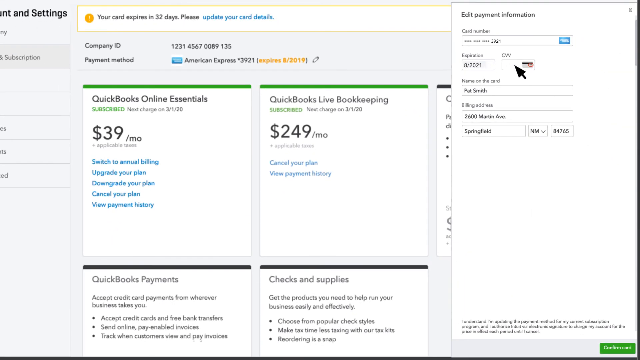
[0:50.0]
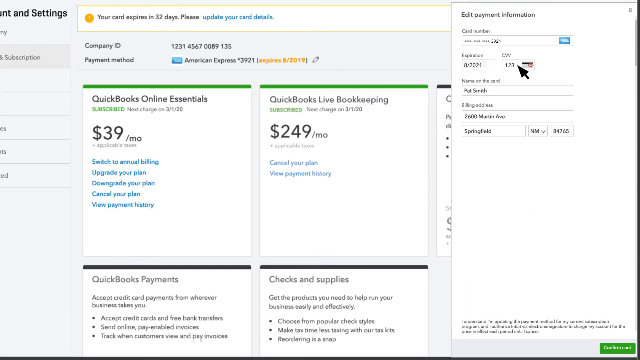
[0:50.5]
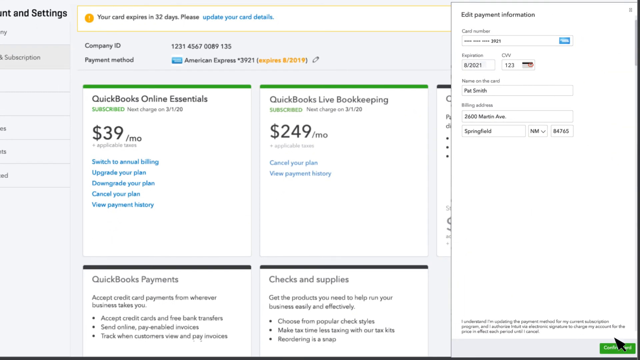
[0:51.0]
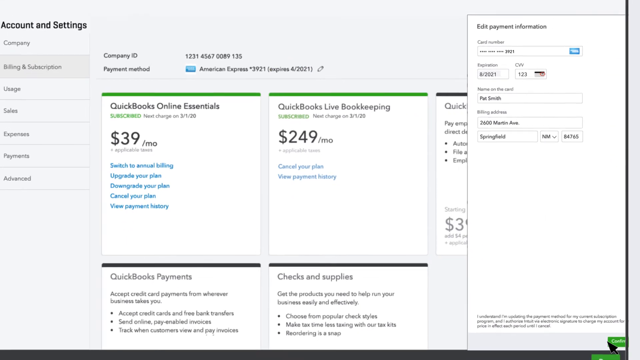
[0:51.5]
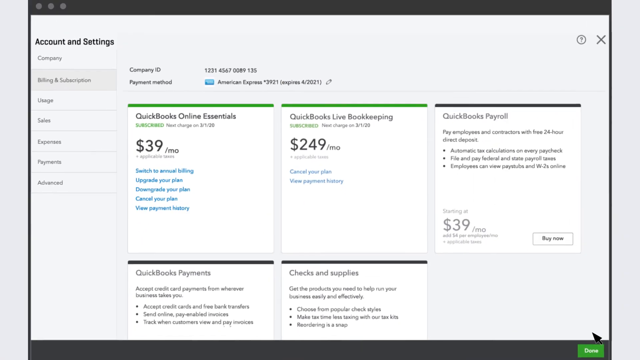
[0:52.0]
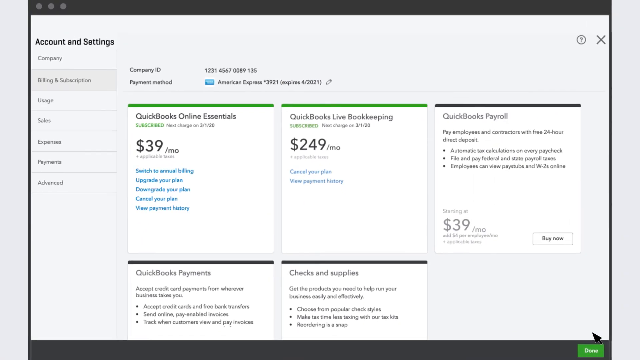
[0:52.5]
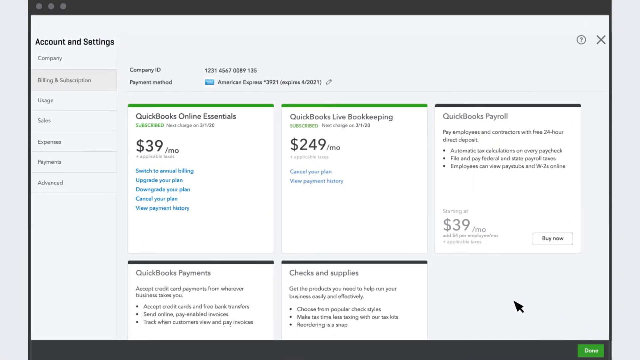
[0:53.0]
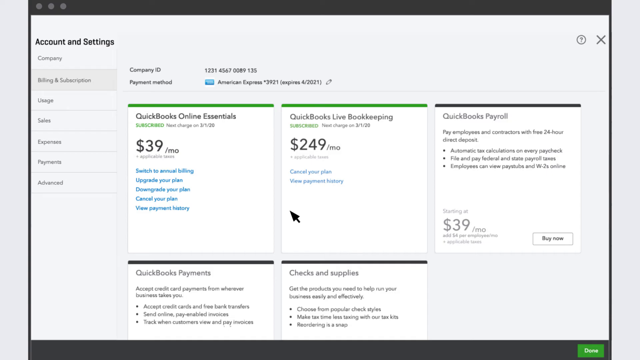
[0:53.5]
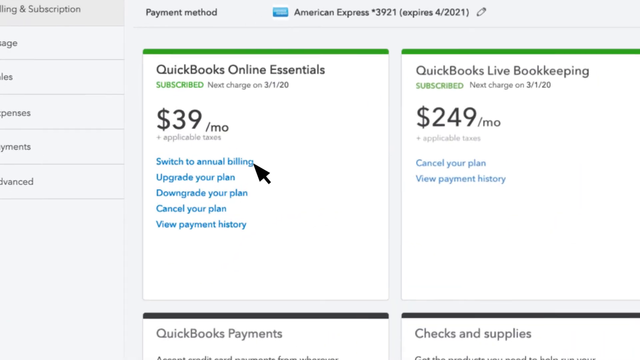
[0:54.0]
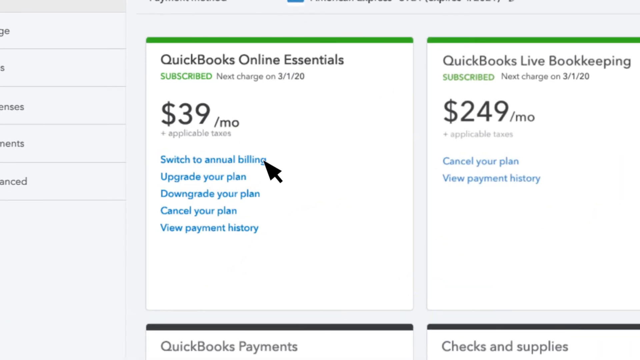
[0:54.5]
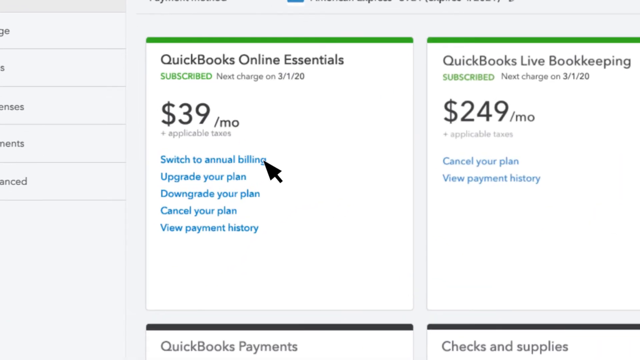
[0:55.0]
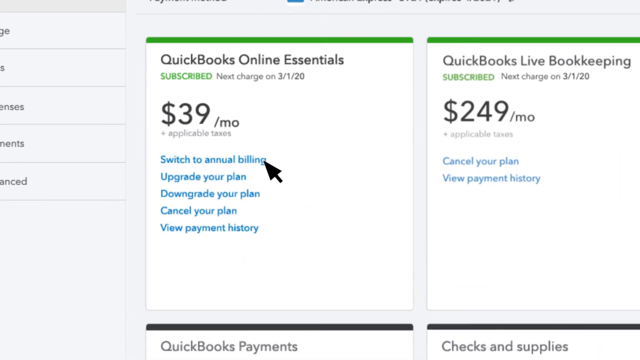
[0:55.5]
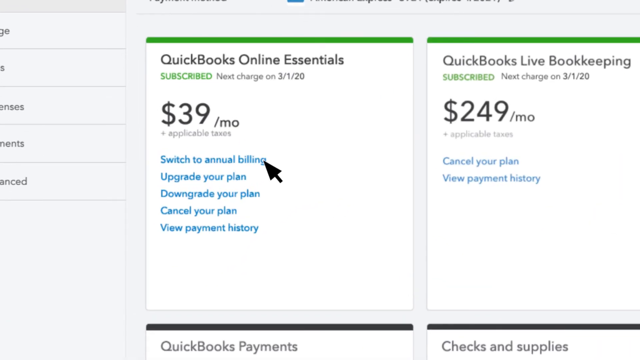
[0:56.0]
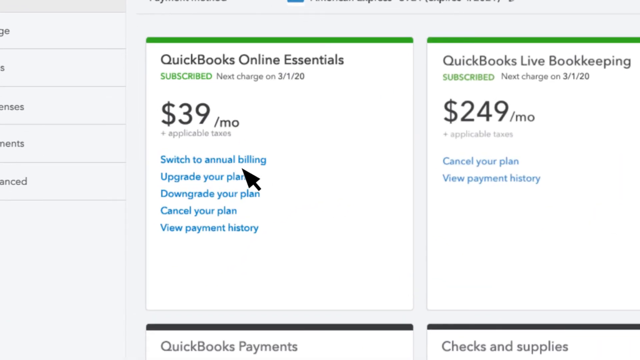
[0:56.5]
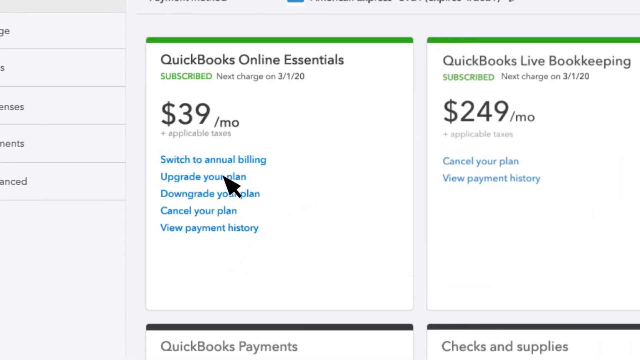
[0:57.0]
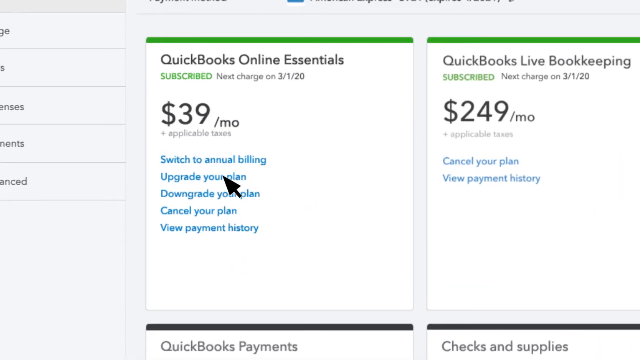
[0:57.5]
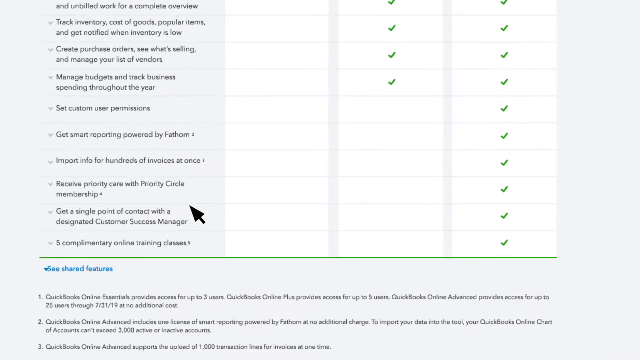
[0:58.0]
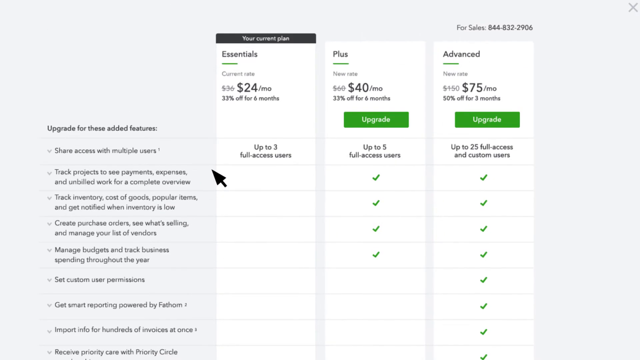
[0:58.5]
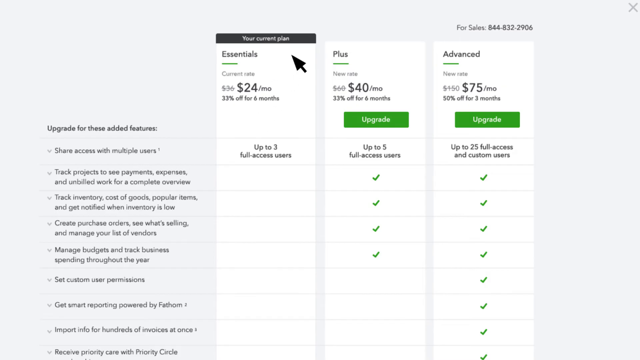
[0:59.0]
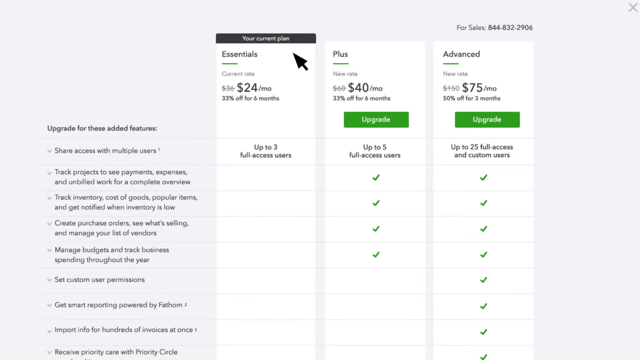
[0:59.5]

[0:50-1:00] The arrow continues navigating the page. It points to "QuickBooks online essentials" at $39 per month, with options to switch to annual billing, upgrade or downgrade the plan, cancel the plan, or view payment history. Alongside it, another plan costs $249 per month and also has options to cancel the plan or view payment history. When upgrade plans is clicked, three plans appear: the least expensive, essentials, at $24 a month, followed by plus at $40 per month and advanced at $75 per month.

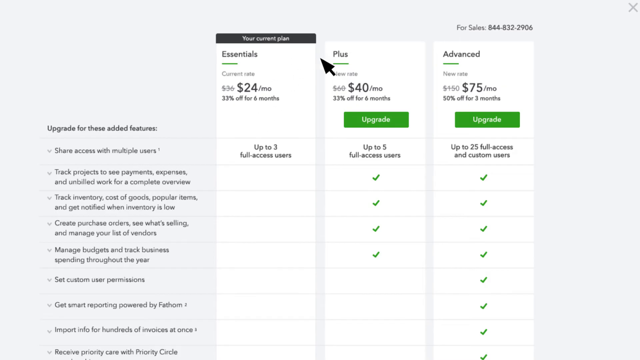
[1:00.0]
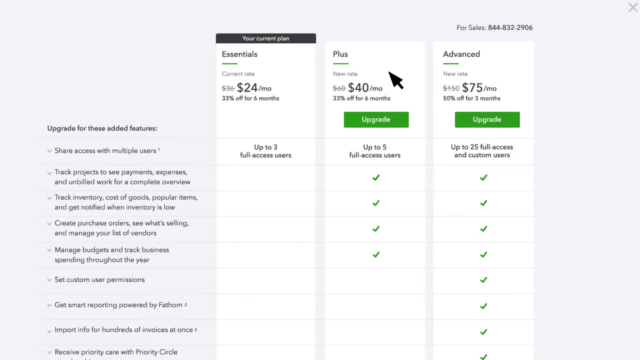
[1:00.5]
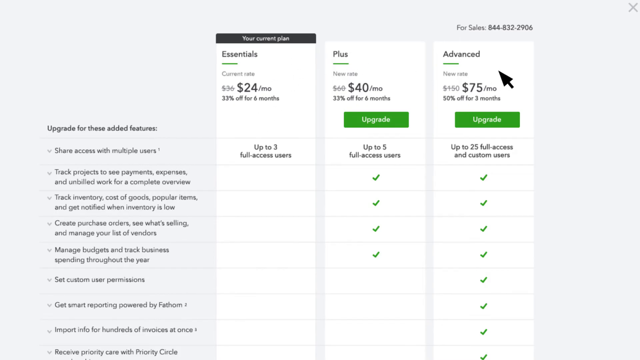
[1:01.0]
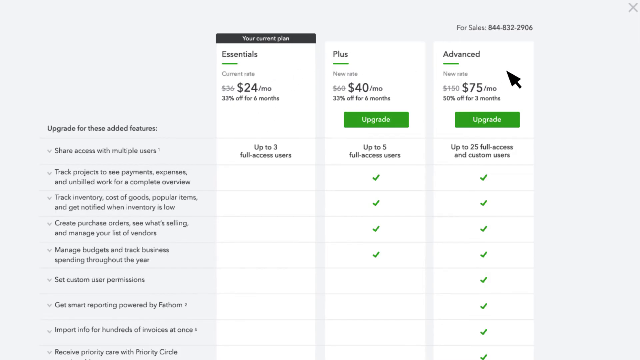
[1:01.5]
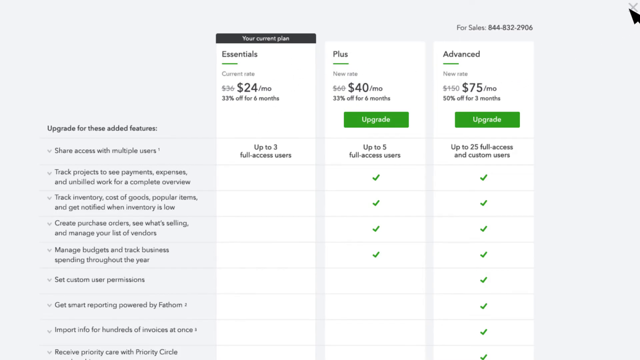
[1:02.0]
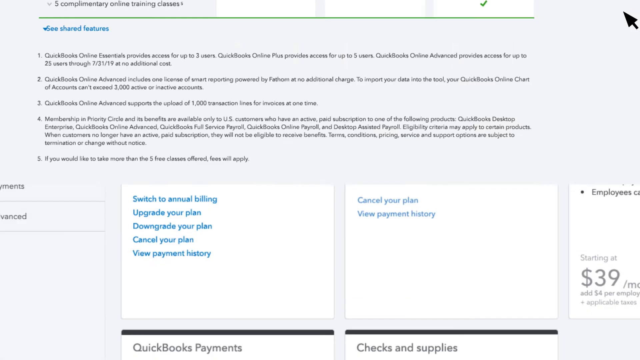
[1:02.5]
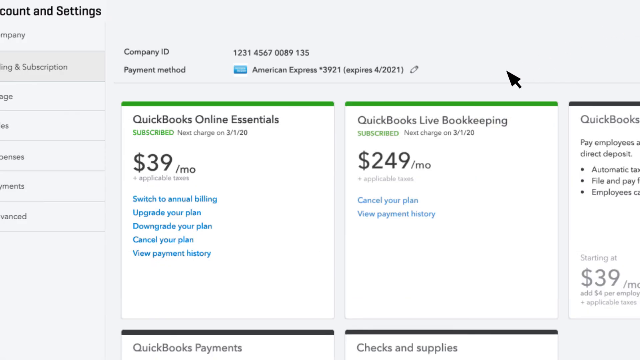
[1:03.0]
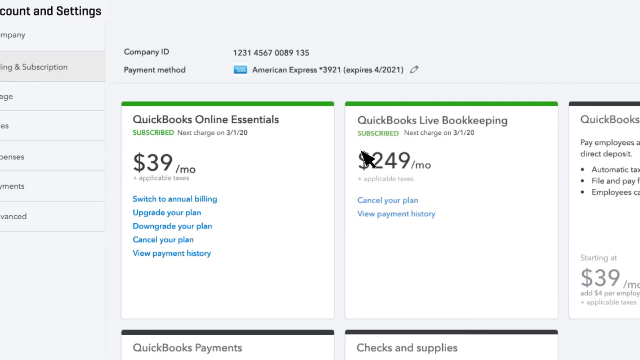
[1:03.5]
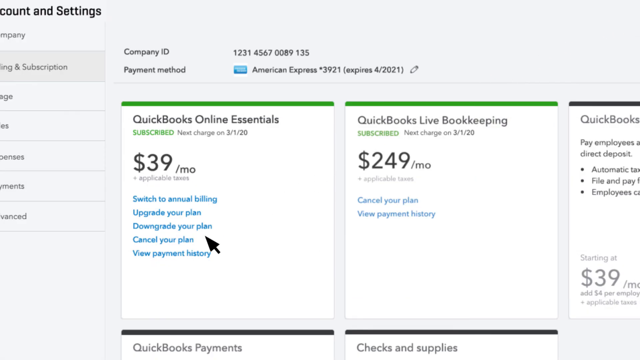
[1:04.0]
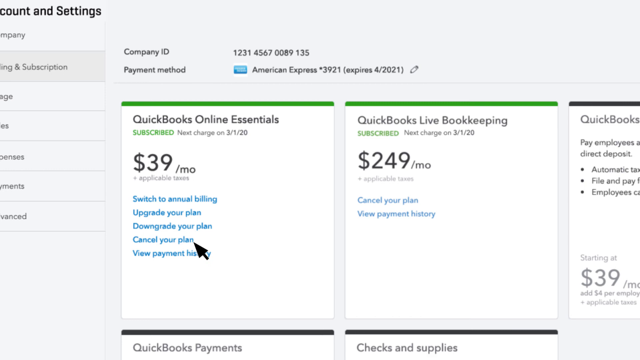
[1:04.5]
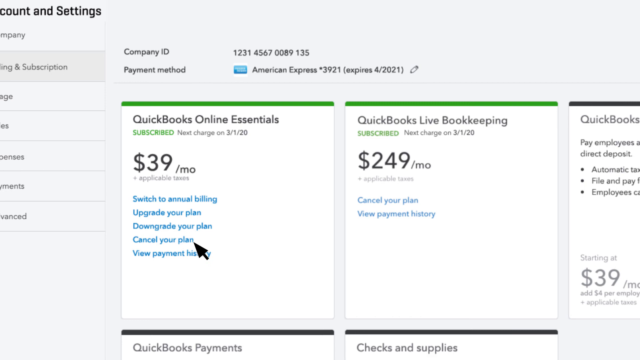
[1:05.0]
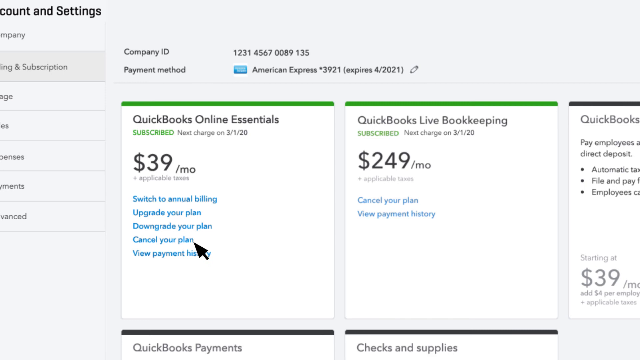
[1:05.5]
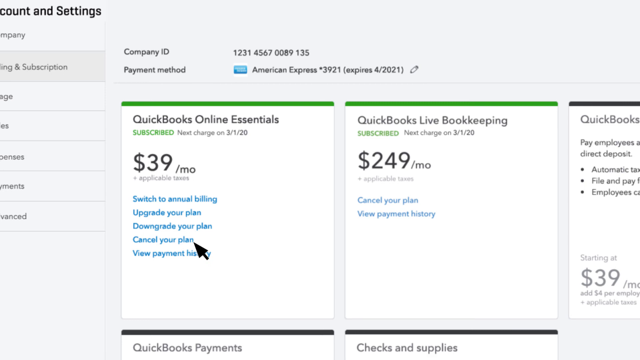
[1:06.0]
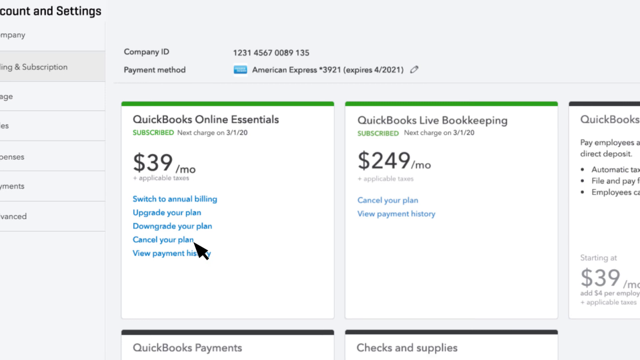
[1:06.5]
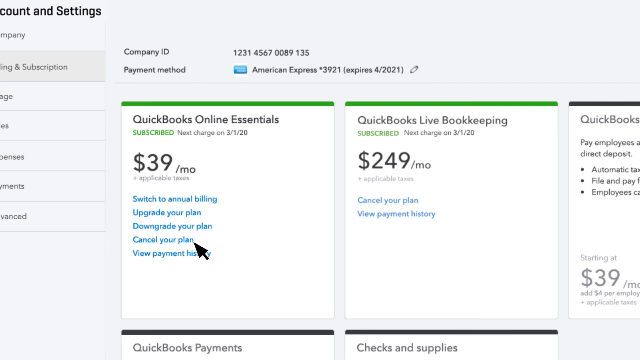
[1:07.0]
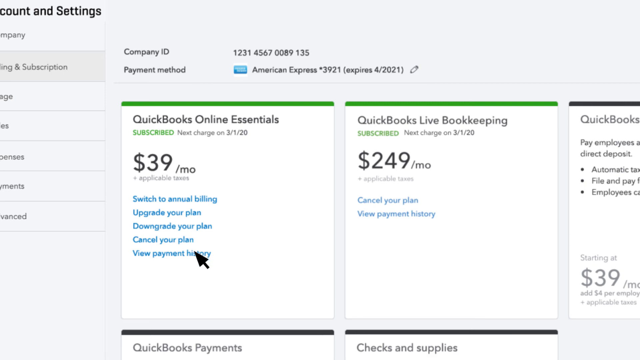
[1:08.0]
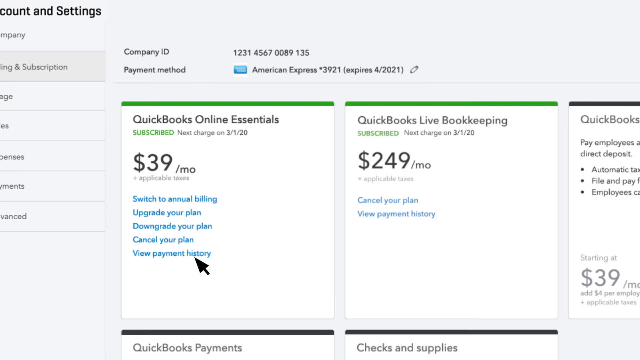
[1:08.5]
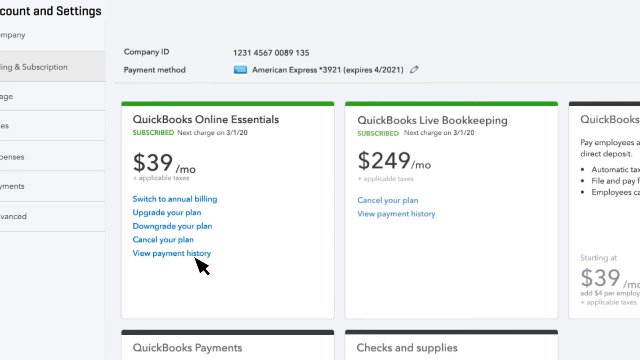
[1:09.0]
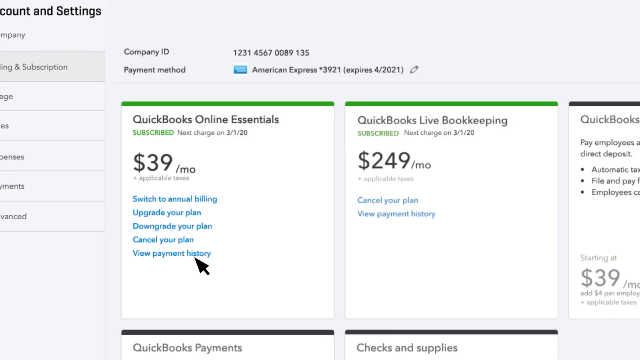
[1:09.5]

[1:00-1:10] The three plans remain on screen, and the navigation moves to where one can cancel a plan and view payment history. The current plan offers shared access with multiple users, up to three full access users. The other two plans list additional features: tracking projects to see payments, expenses and work for a complete overview; tracking inventory cost of goods and popular items with notifications when inventory is low; creating purchase orders, seeing what's selling and managing a list of vendors; and managing budgets and tracking business spending throughout the year. The advanced plan adds two more: setting custom user permissions and smart reporting.